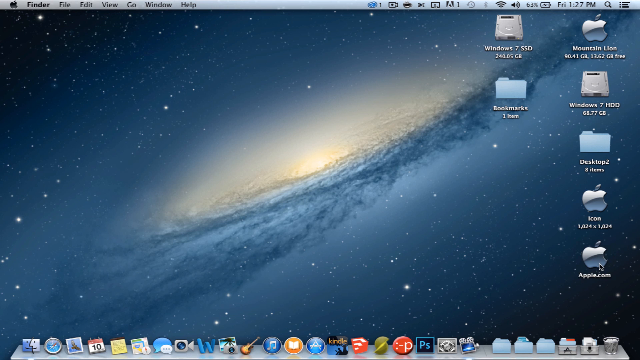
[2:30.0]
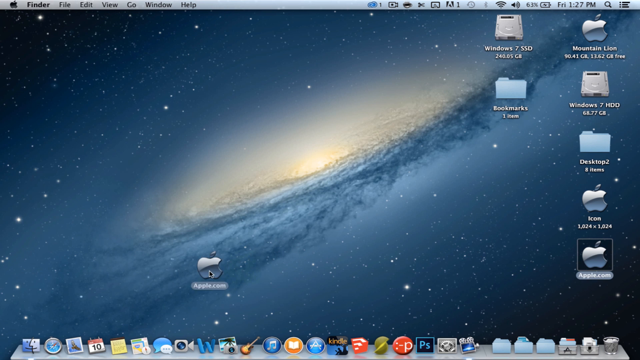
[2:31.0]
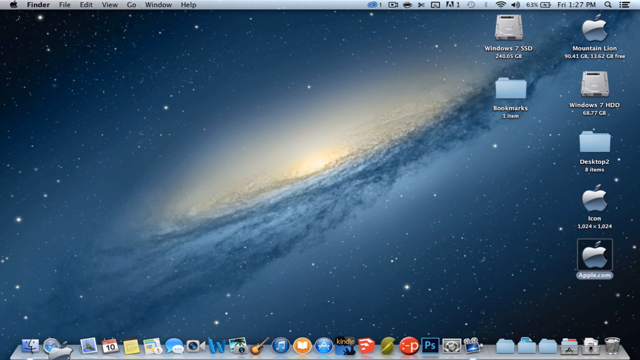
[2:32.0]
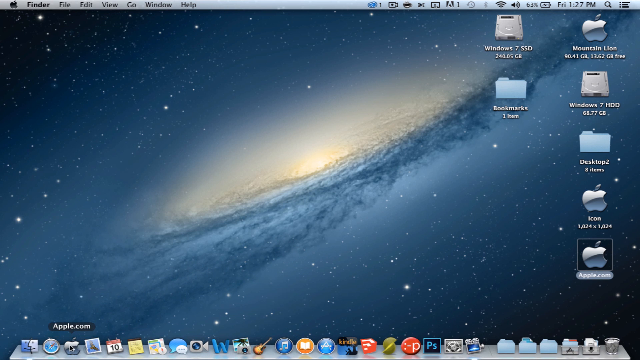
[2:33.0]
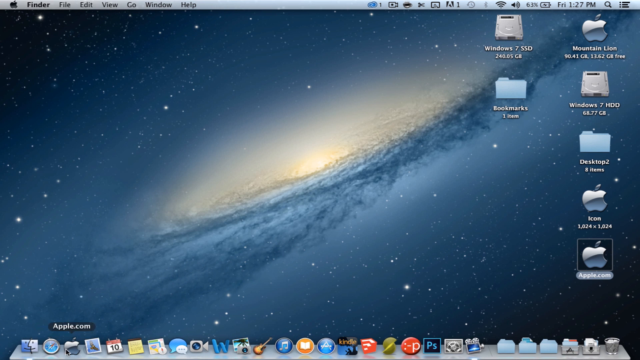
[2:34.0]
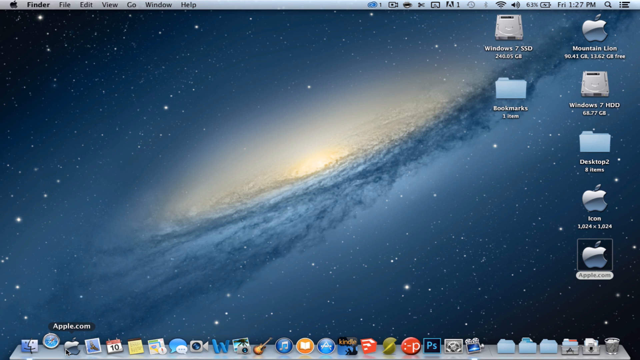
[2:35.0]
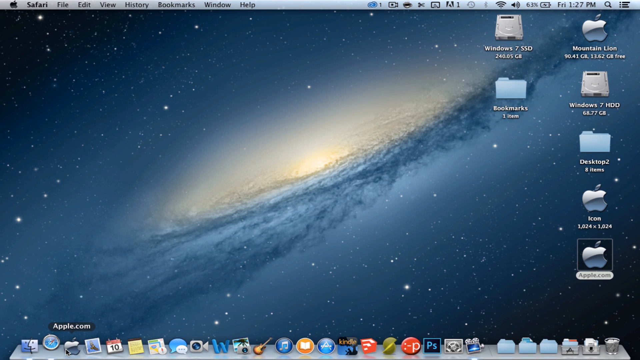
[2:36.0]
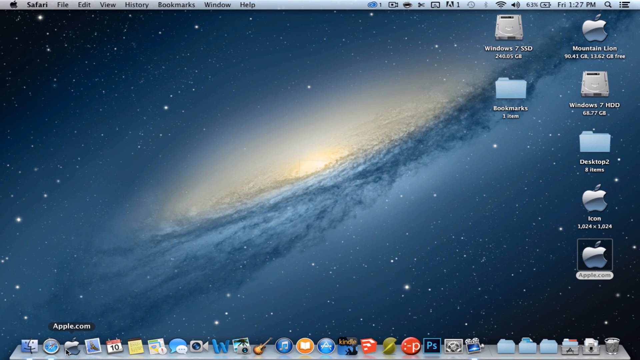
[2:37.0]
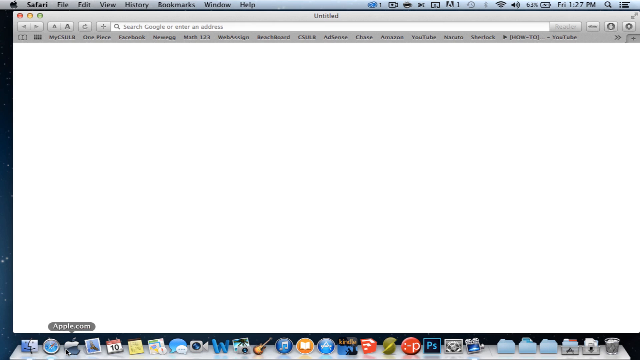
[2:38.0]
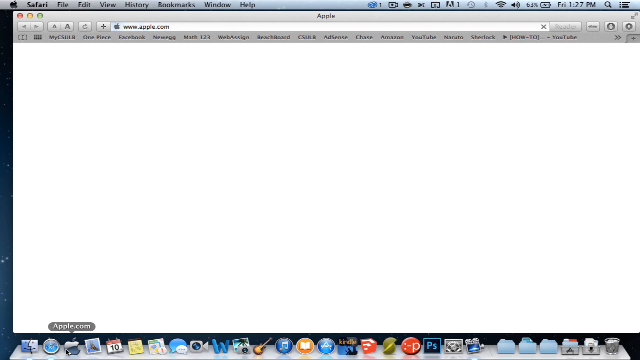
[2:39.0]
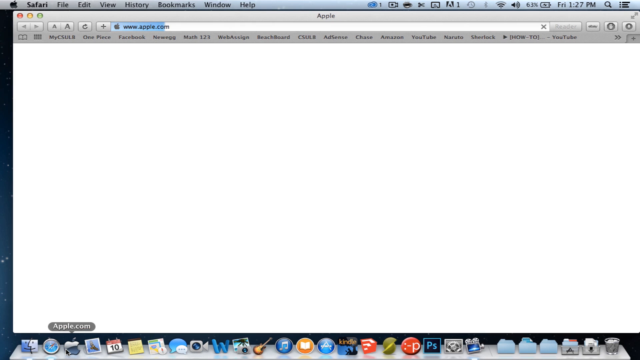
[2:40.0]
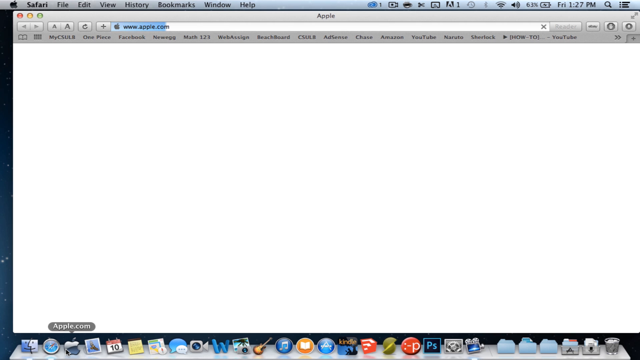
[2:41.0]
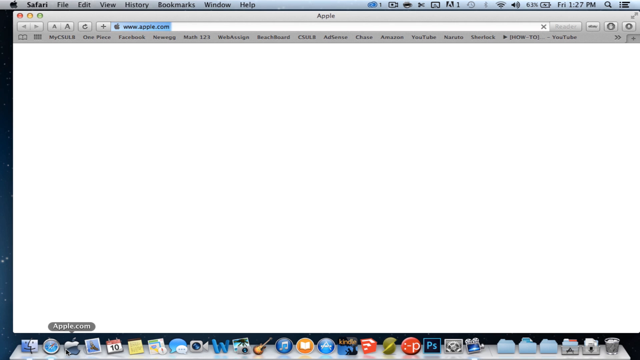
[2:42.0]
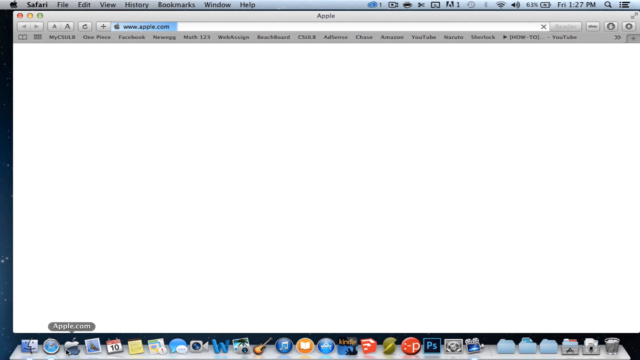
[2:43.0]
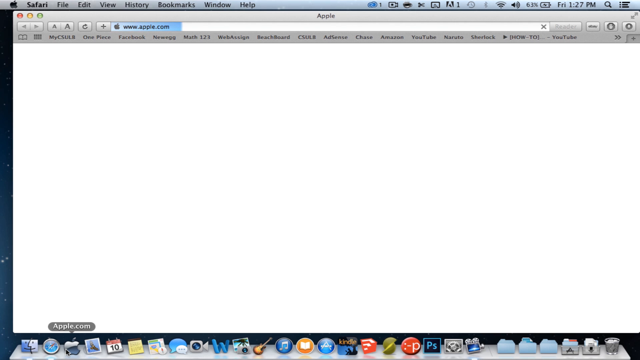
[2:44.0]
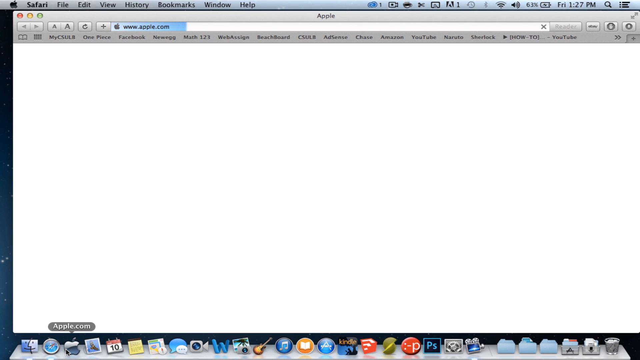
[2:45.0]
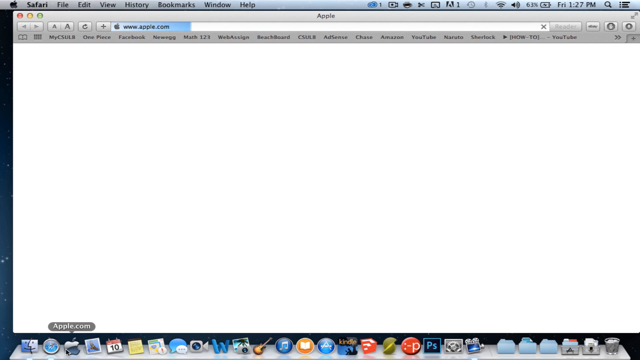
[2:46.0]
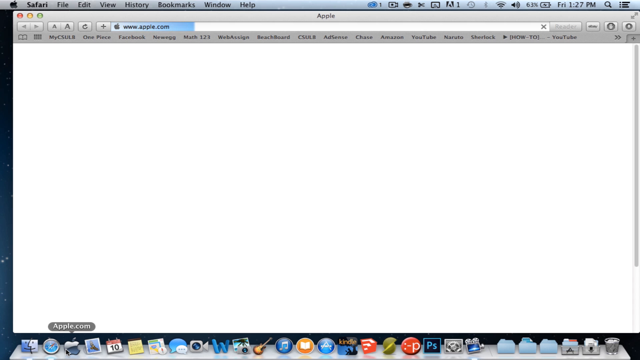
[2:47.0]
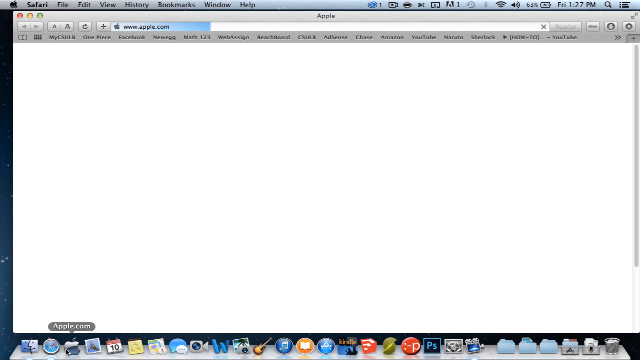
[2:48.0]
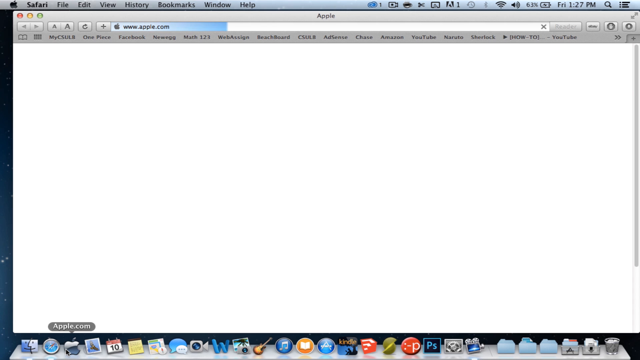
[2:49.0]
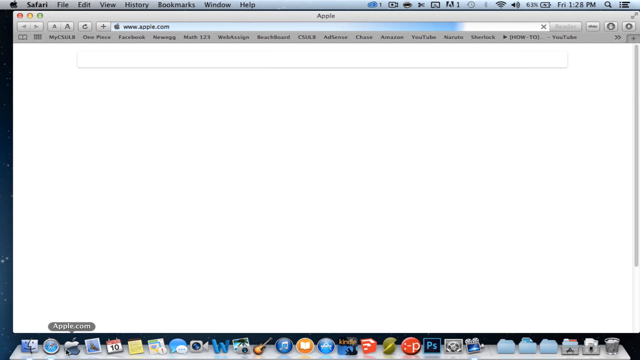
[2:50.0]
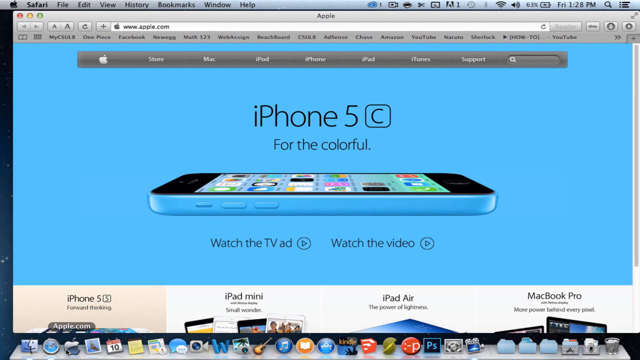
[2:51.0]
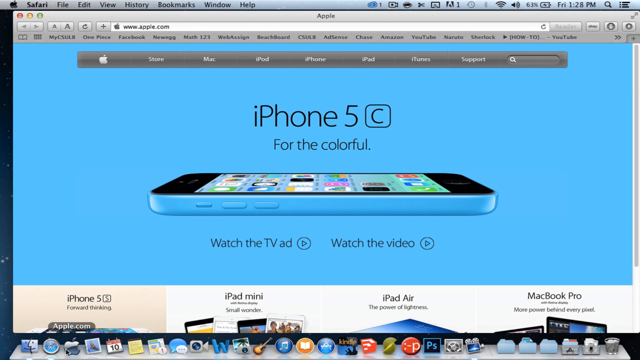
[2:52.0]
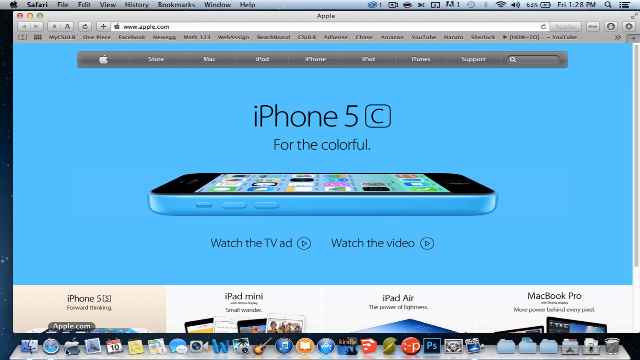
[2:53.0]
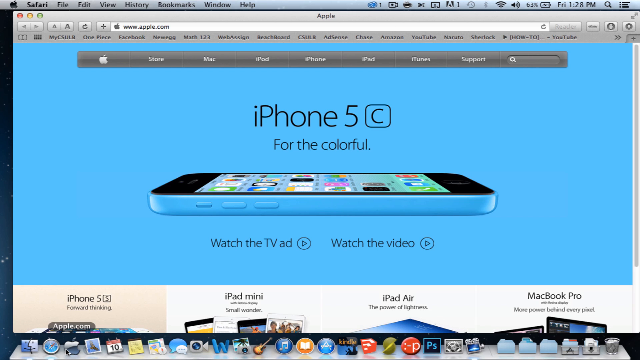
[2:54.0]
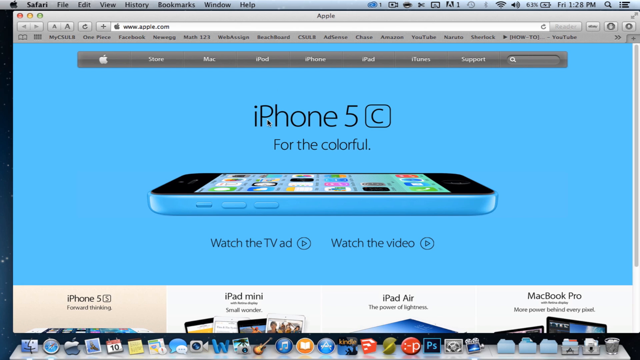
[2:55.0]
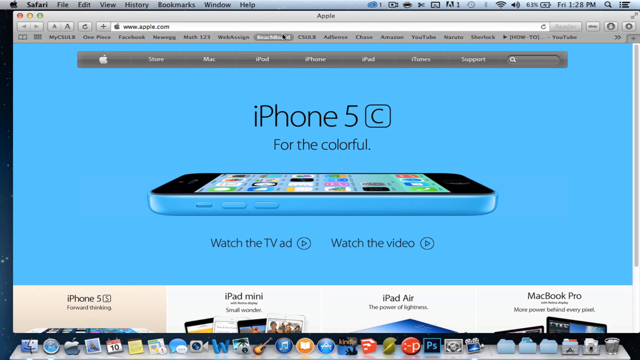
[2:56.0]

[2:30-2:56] The user drags the Apple.com application, now with the custom Apple logo icon, down to the macOS dock at the bottom of the screen, where it sits alongside other programs. They click the application icon in the dock, launching the custom Automator workflow, which opens Safari and begins loading the Apple website. As the homepage finishes loading, the screen briefly displays a featured image of the iPhone 5G. The page stays open just long enough to show that the app opens the intended website, and the video ends there.